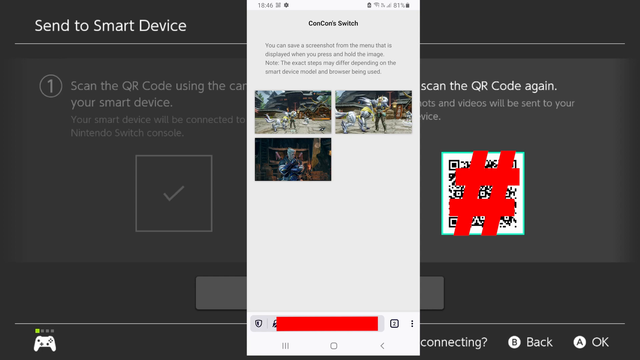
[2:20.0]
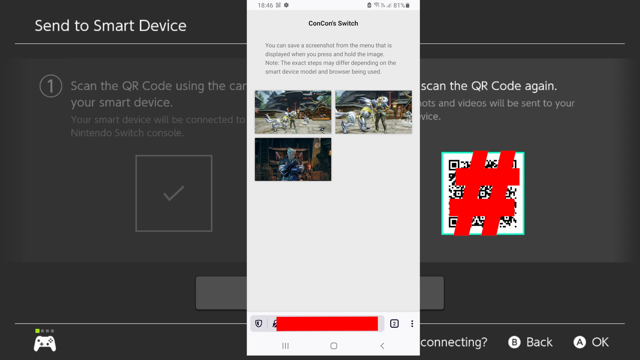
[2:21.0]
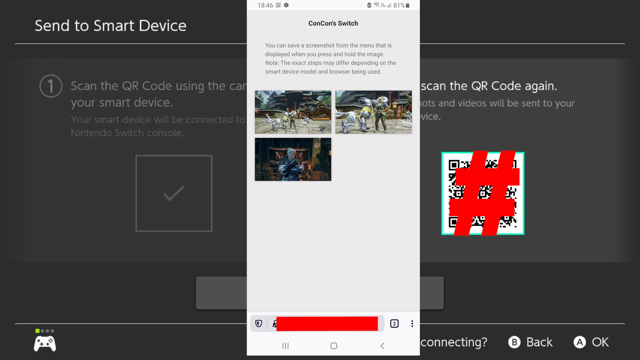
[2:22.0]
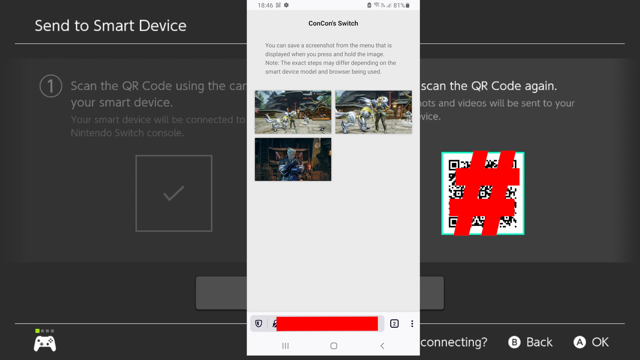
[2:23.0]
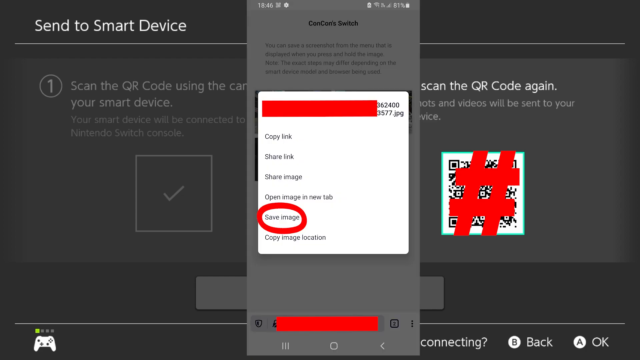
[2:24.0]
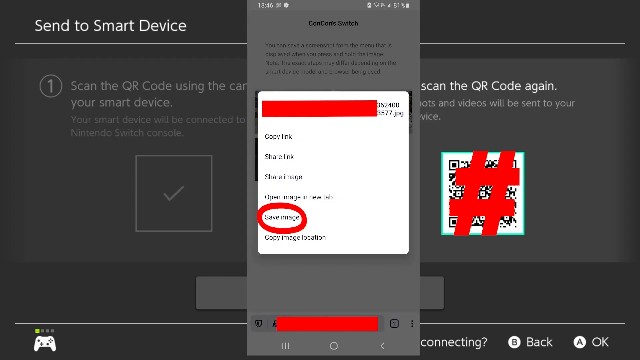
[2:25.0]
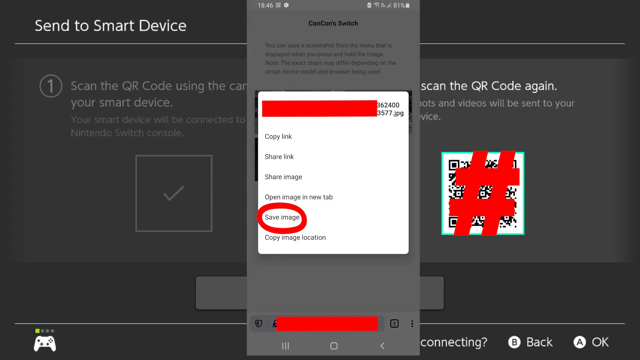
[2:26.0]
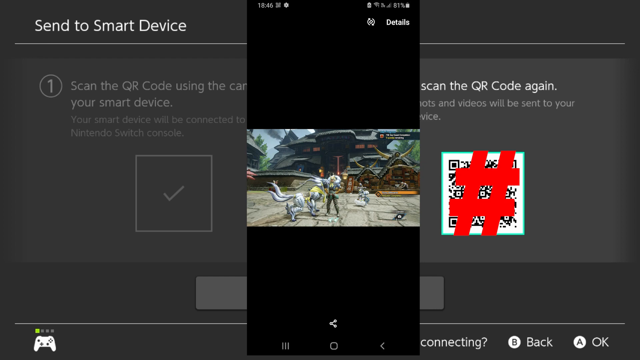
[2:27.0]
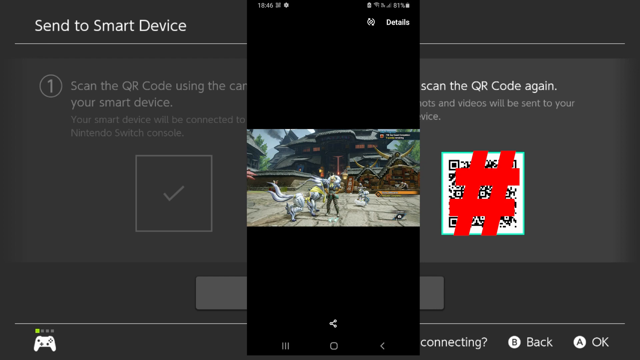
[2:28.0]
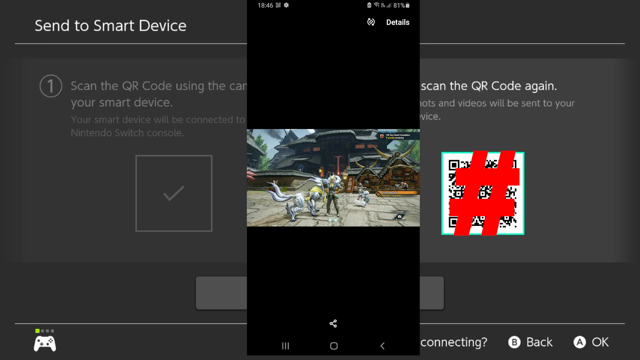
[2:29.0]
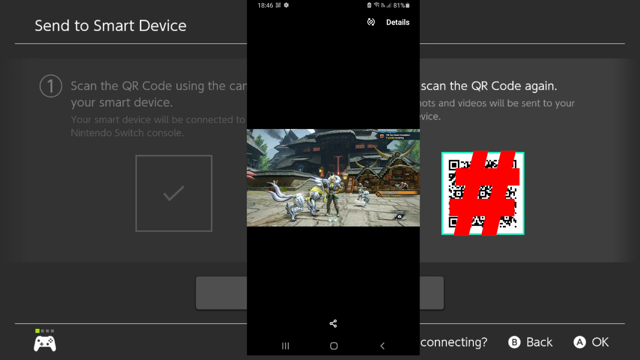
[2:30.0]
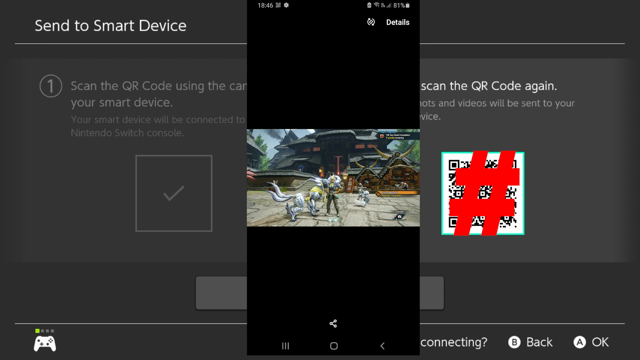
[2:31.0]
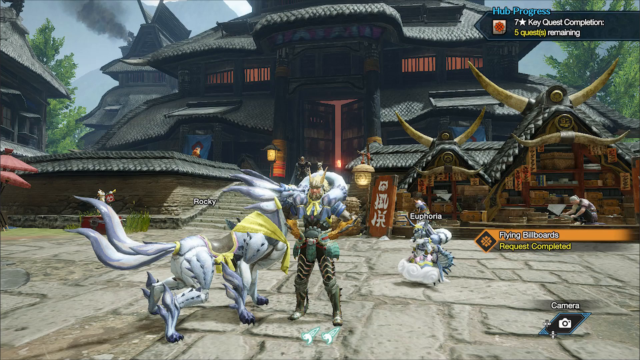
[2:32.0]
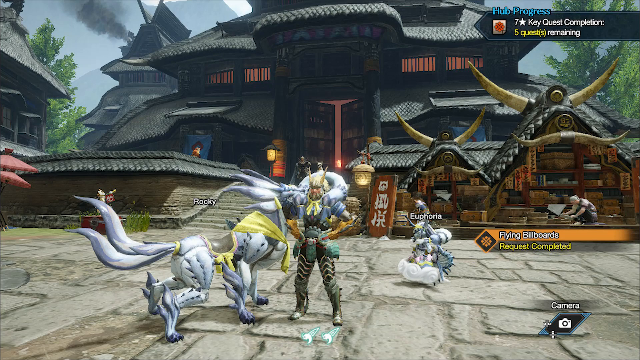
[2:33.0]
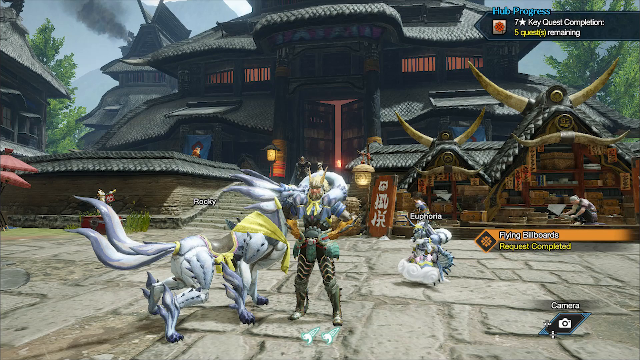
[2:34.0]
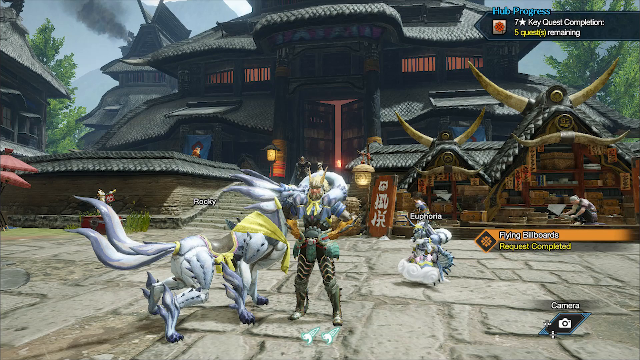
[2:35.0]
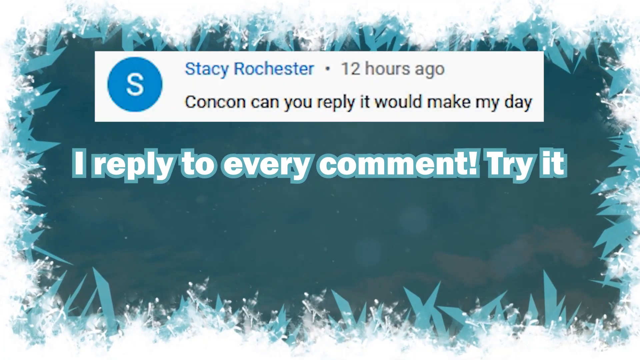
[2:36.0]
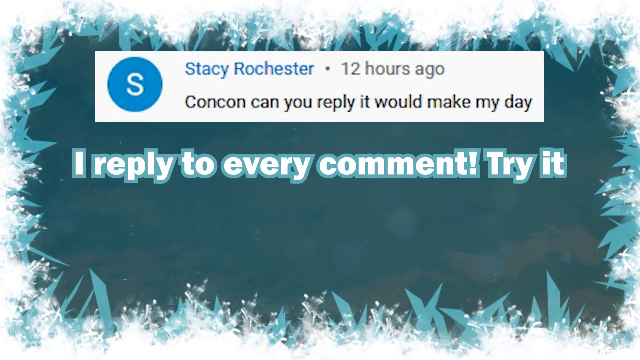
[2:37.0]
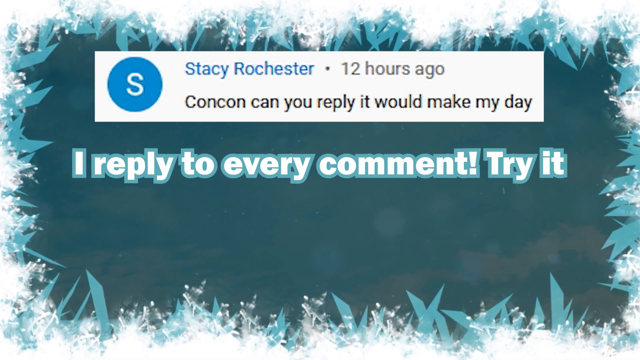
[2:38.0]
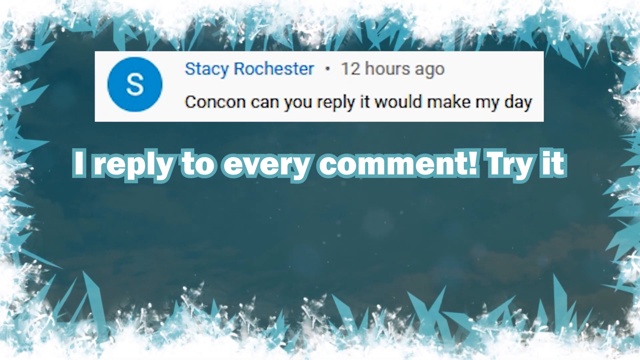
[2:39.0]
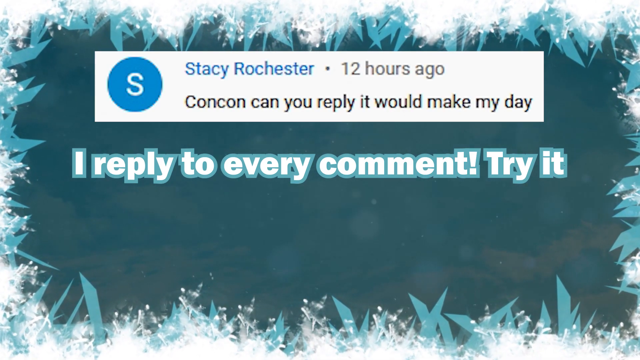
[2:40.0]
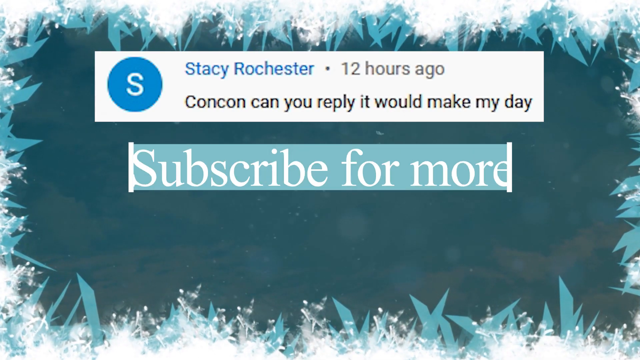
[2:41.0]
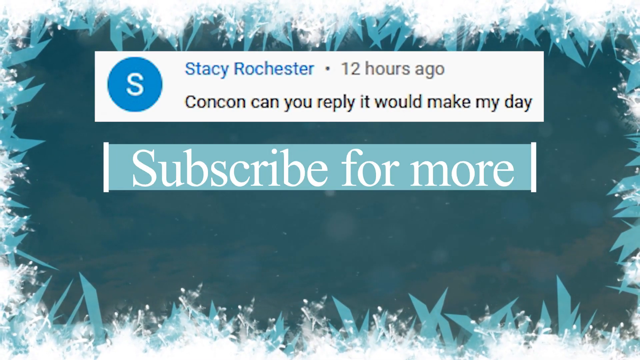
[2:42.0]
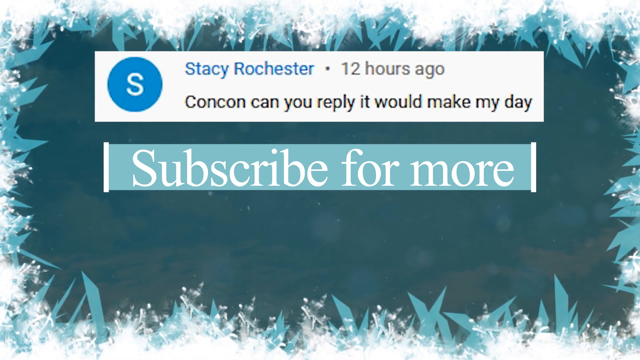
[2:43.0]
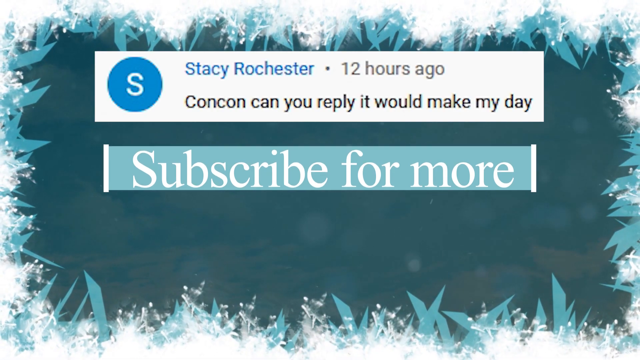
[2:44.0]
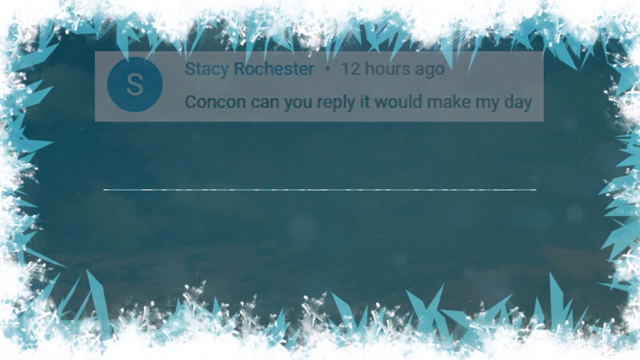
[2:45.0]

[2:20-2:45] On the phone, the three images are still pulled up. The user seems to have selected one of them, and a pop-up appears with a variety of options: copy link, share link, share image, open image in new tab, save image, and copy image location, with the save image option circled. The user performs that action and the view goes to the image, now saved in the phone's camera roll. A big version of the same screen capture fills the screen: the player's character standing alongside the two pets in front of the building. What is apparently a YouTube tutorial video then moves to its outro, featuring a comment from Stacy Rochester, posted 12 hours ago, reading "Concon can you reply it would make my day". Under it is a text response from the creator saying he replies to every comment. More text pops up reading "Subscribe for more" and then fades out.